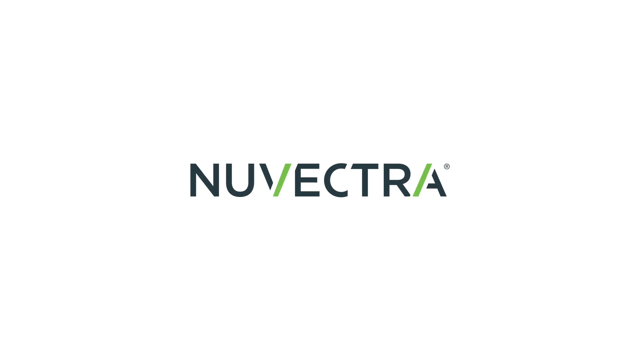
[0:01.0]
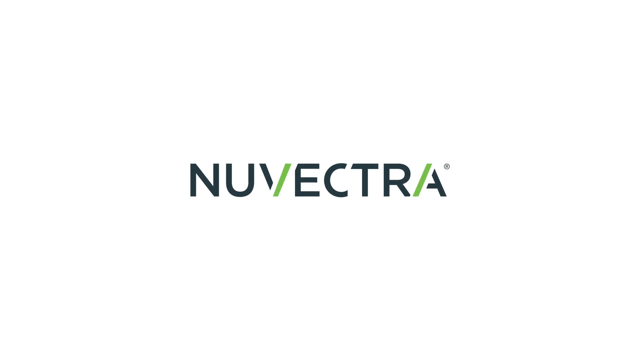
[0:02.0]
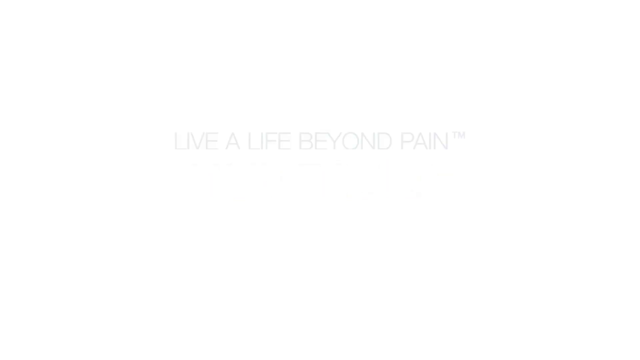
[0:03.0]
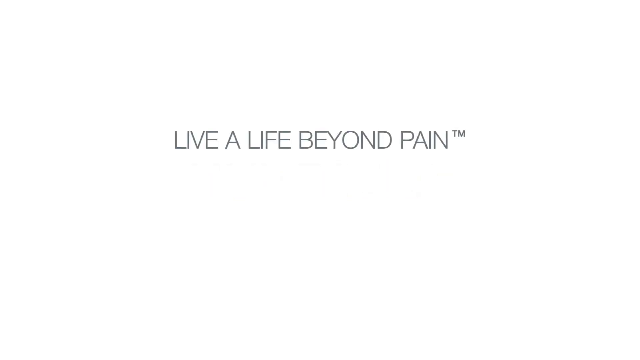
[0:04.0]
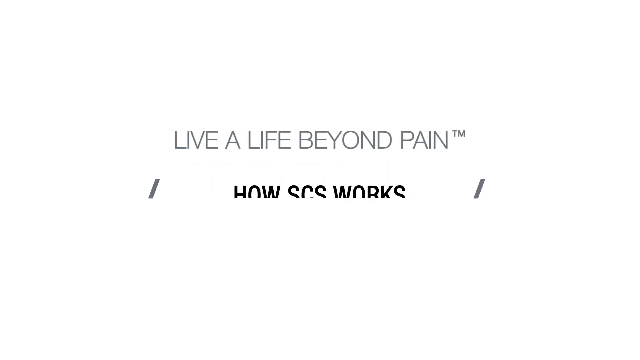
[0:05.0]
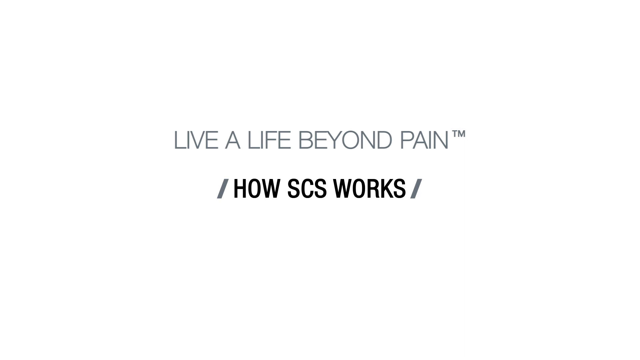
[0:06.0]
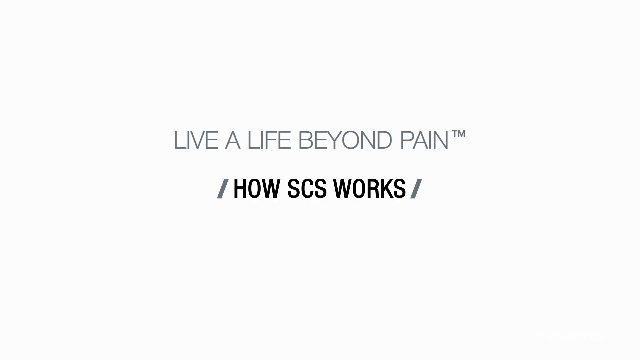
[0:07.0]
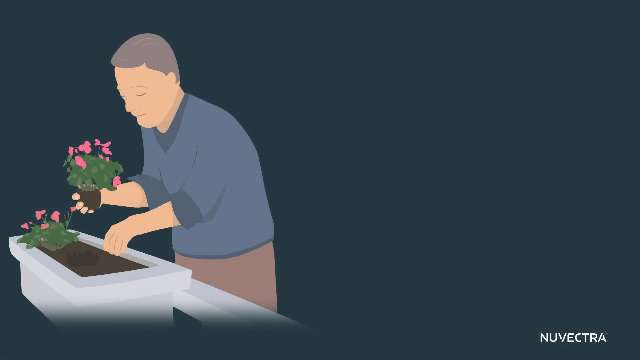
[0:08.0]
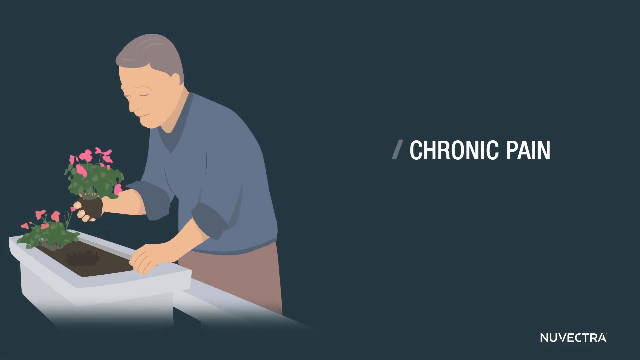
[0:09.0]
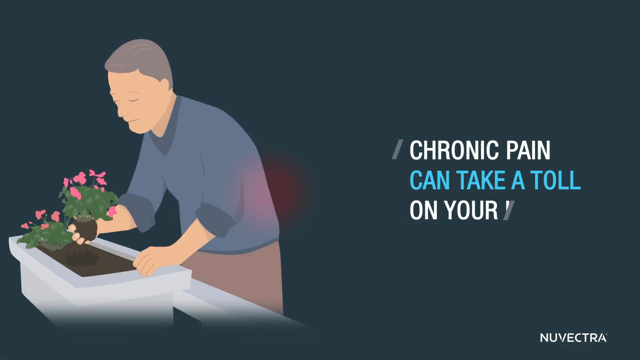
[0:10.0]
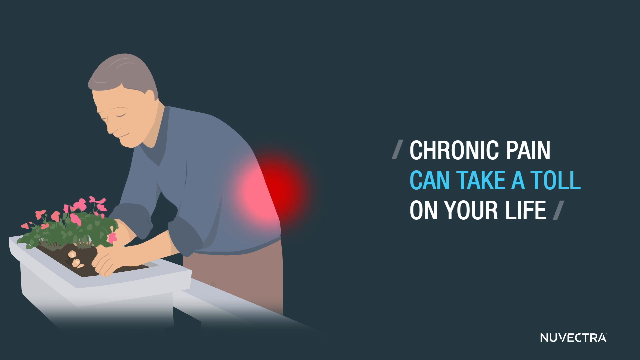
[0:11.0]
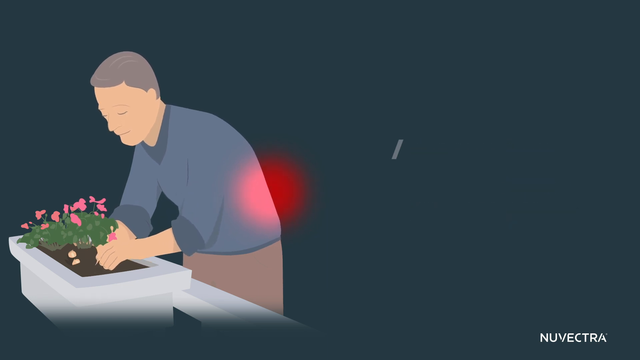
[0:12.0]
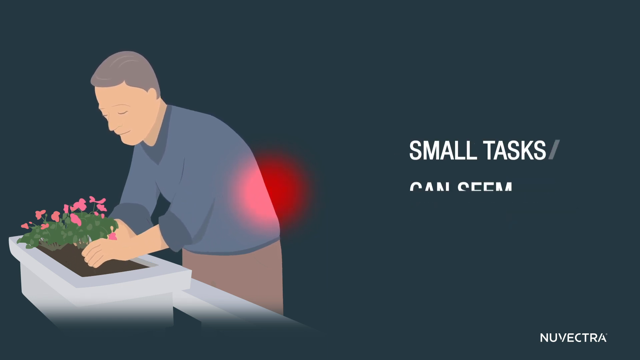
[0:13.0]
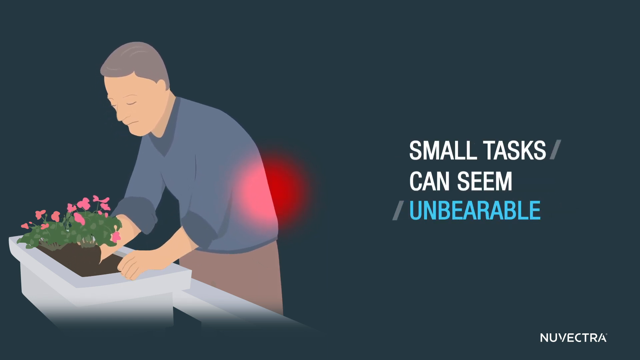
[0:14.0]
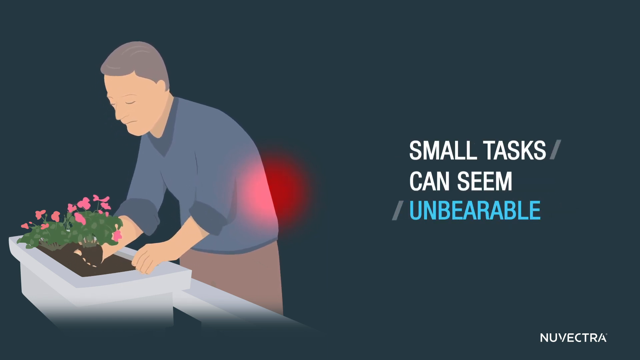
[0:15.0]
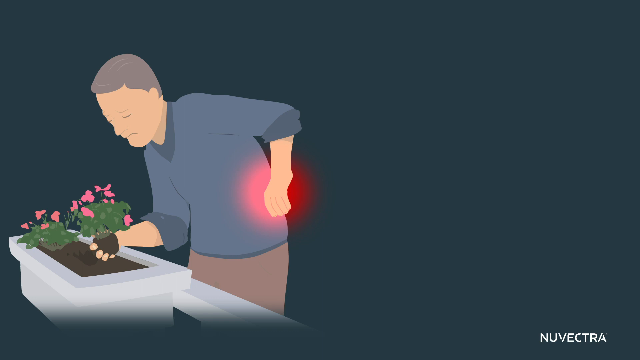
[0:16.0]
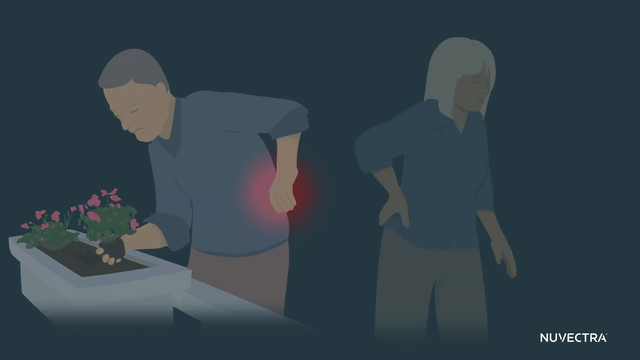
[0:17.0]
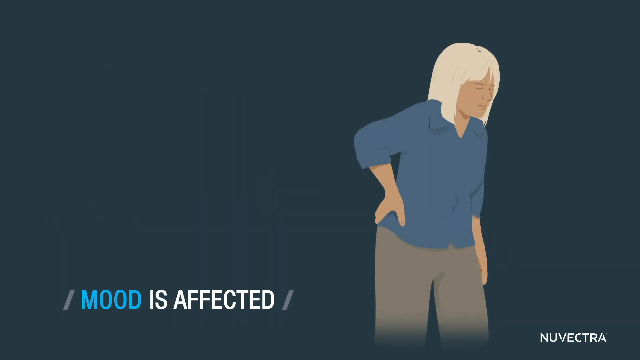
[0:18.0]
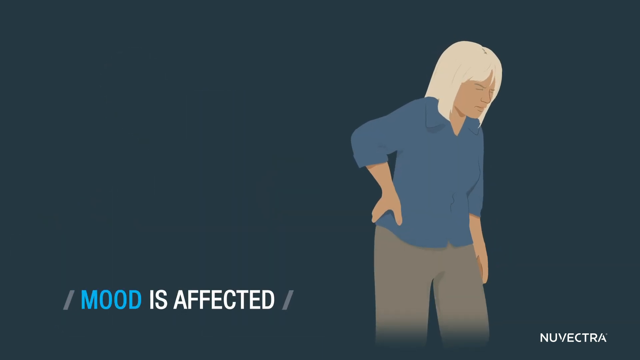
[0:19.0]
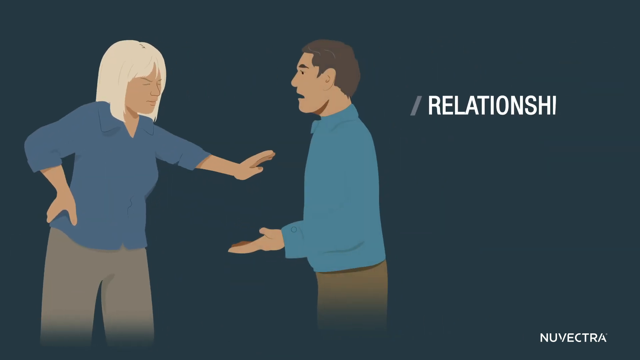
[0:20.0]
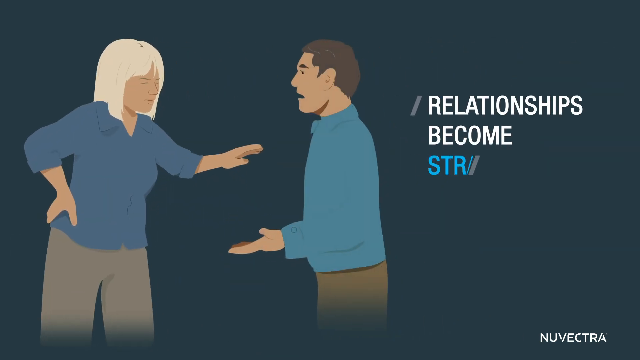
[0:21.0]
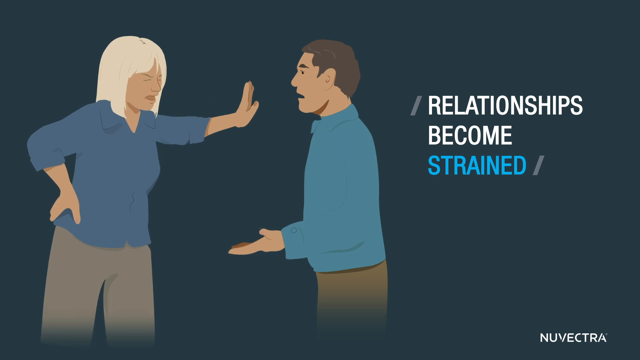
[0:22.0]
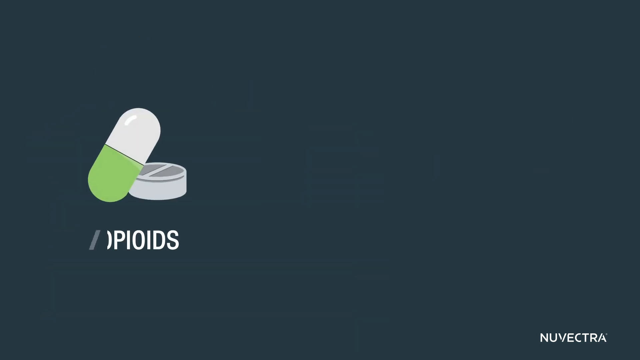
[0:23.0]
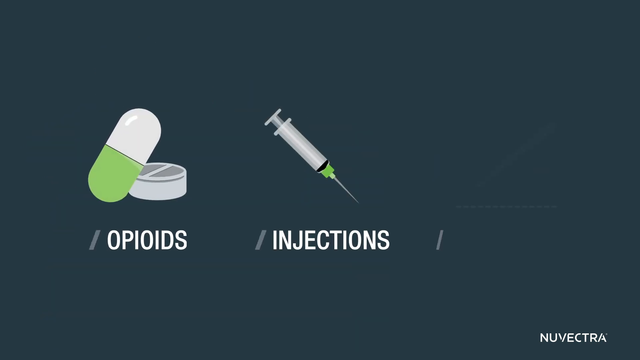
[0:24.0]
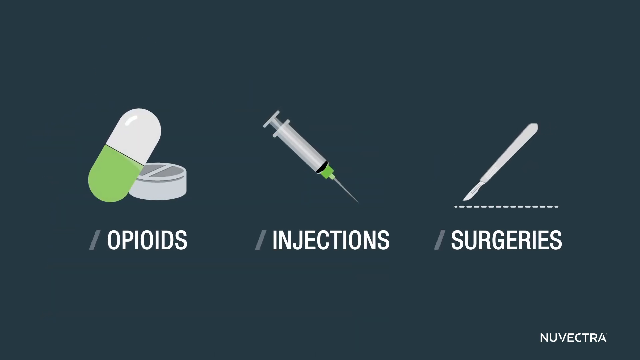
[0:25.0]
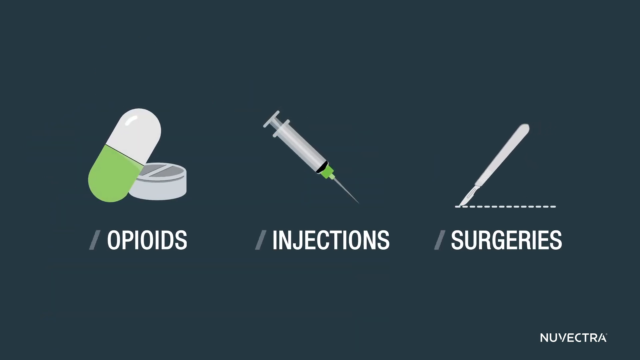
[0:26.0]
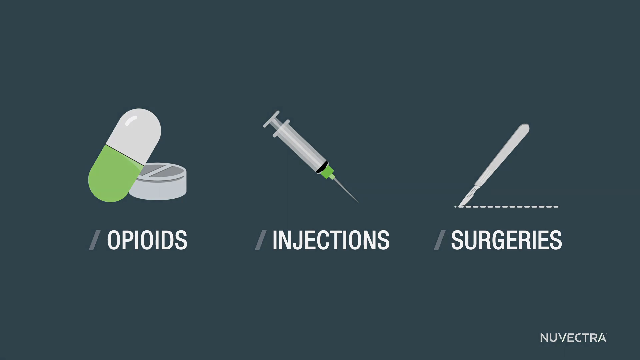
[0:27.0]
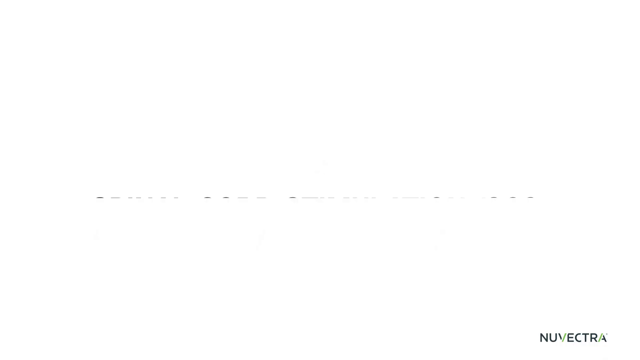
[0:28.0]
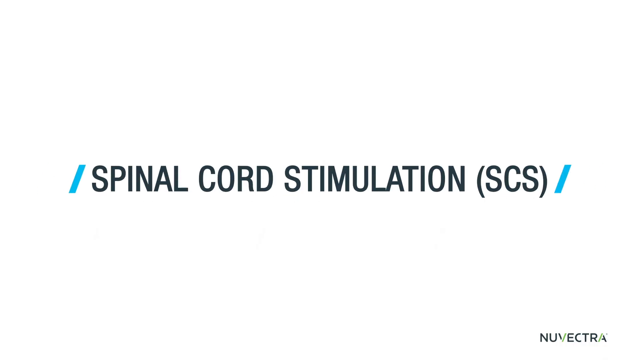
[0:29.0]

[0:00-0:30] A white screen shows a logo in the center: black text reading "Nevectra," with the V half green and half black and the A half green and half black. When that text disappears, new black text reads "Live a life beyond pain," and below it, "How SCS works." An animated scene with a fairly dark gray background follows, showing a man on the left side of the screen with a raised garden bed, a potted plant of pink flowers, and a hole next to it. He picks up the pink flowers with his right hand while his left hand is over the raised garden bed. To the right, text reads "Chronic pain can take a toll on your life." As he bends over a little to put the flowers back down, a bright red circle appears around his lower back area, and text reads "Small tasks can seem unbearable." A new animated character appears, apparently an older woman with white hair, standing, and text on the bottom left reads "Mood is affected." A man in a light blue shirt enters the middle of the screen, and she pushes her left hand out toward him while text on the right reads "Relationships become strained." Three images then appear: on the left a pill labeled "Opioids," in the middle a needle labeled "Injections," and on the right a surgical knife labeled "Surgeries." A white screen then reads "Spinal cord stimulation."